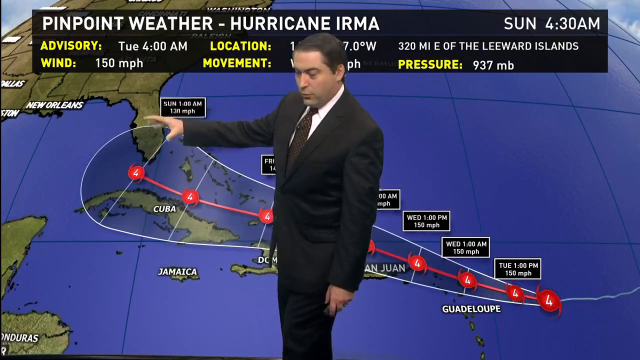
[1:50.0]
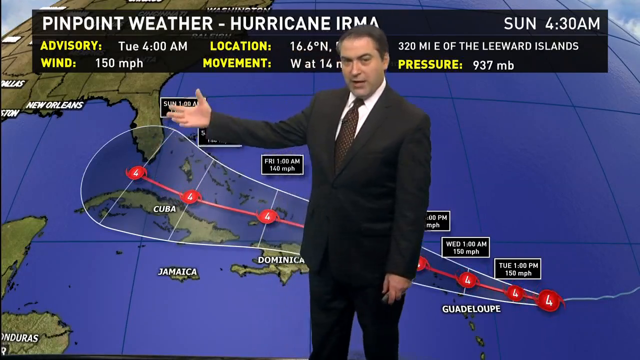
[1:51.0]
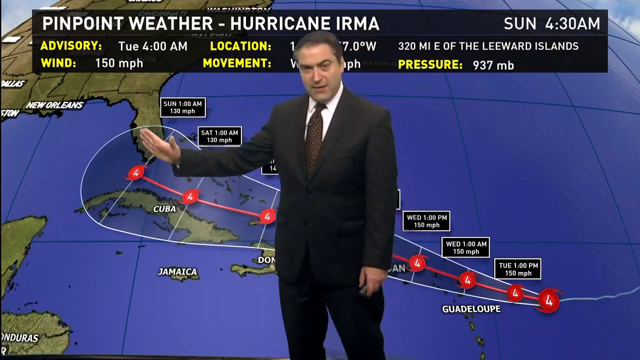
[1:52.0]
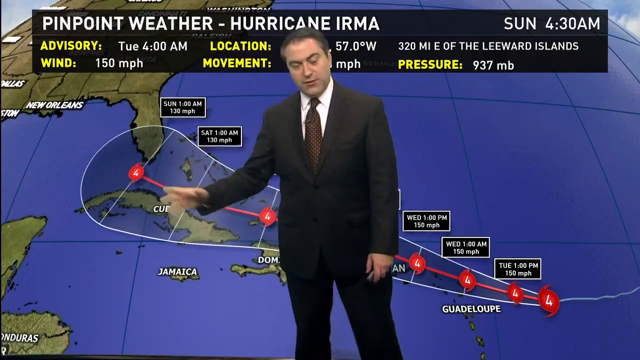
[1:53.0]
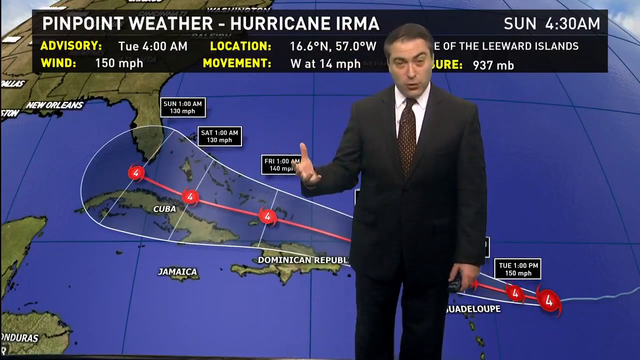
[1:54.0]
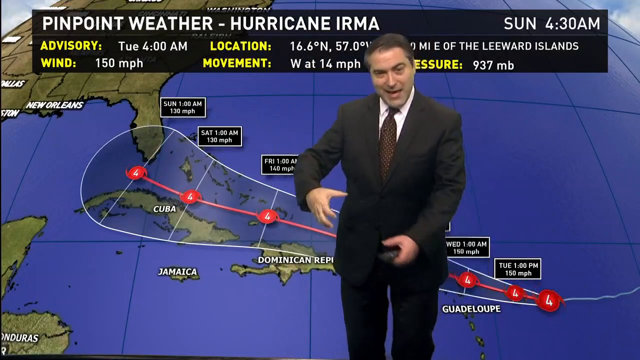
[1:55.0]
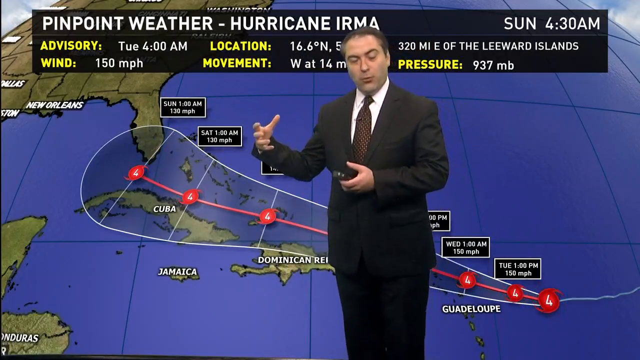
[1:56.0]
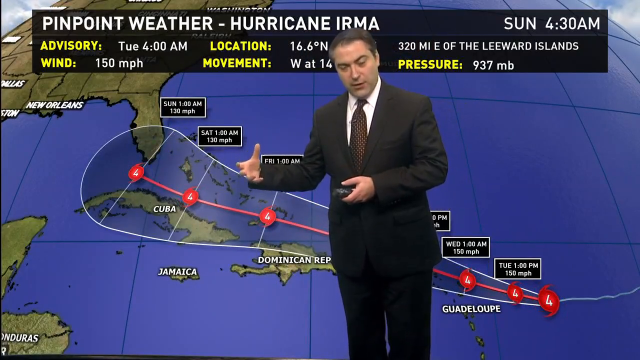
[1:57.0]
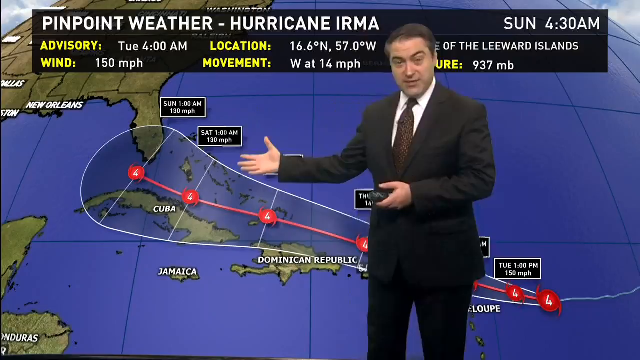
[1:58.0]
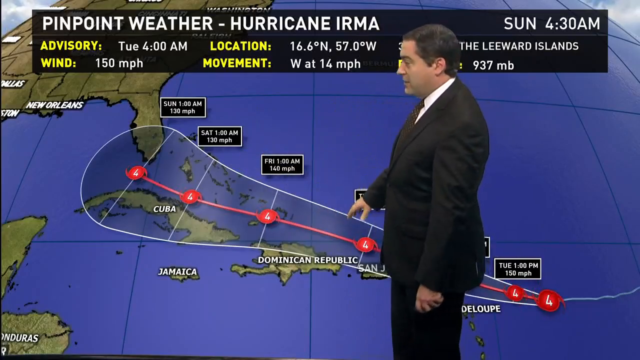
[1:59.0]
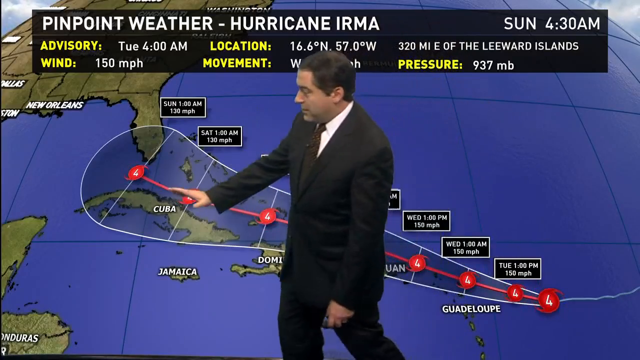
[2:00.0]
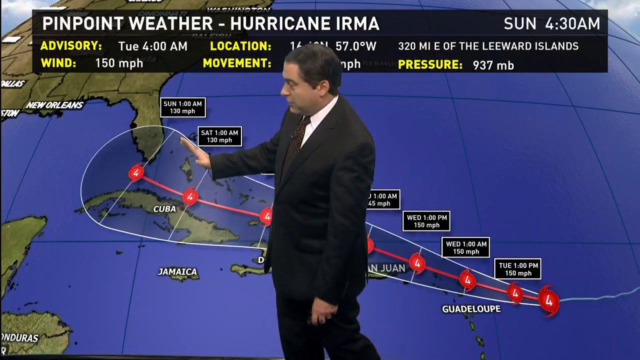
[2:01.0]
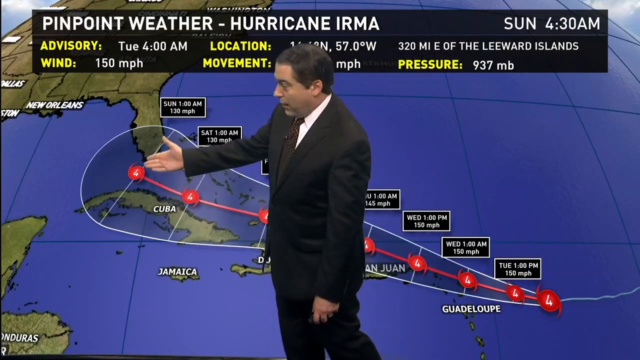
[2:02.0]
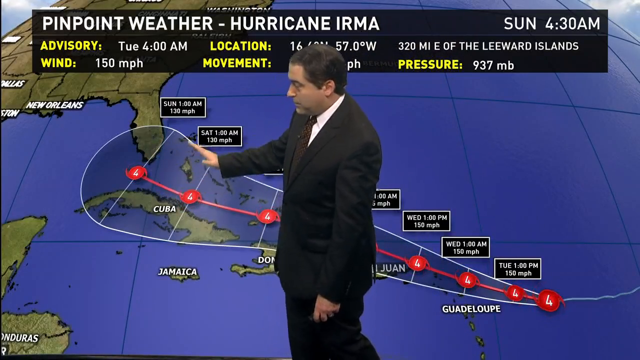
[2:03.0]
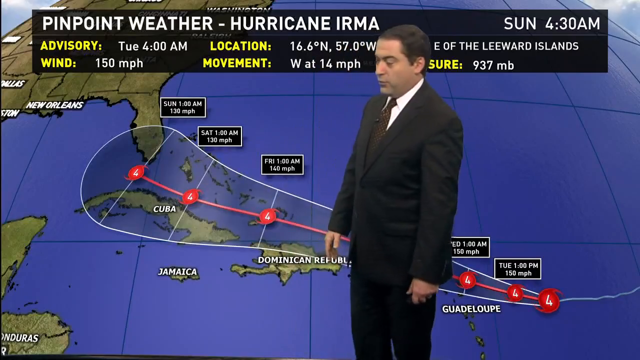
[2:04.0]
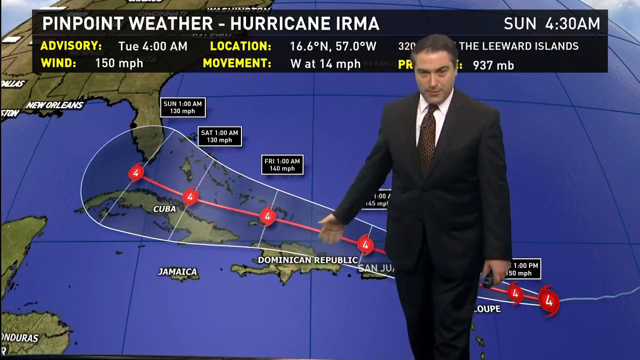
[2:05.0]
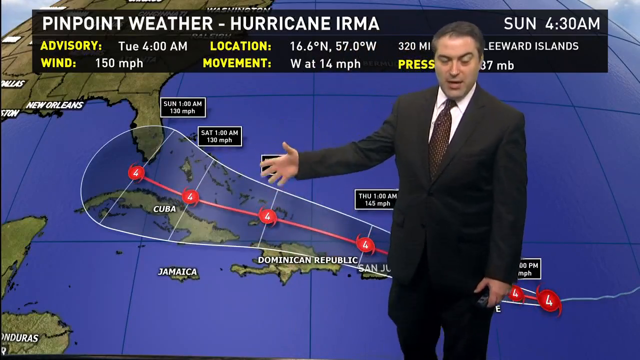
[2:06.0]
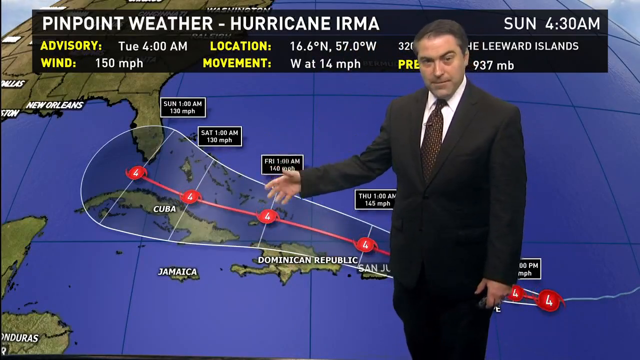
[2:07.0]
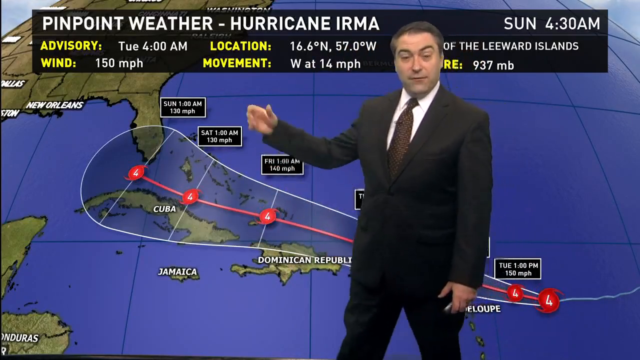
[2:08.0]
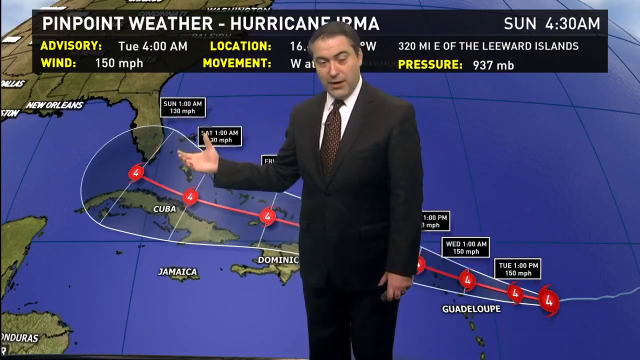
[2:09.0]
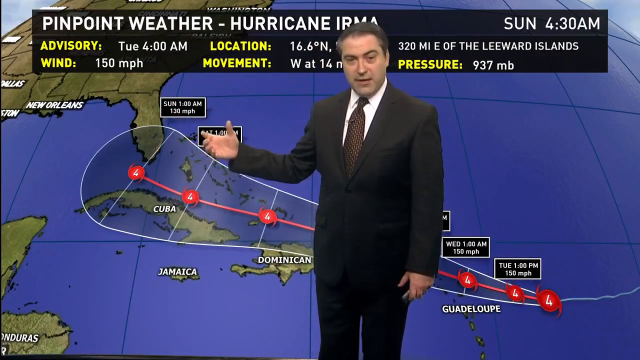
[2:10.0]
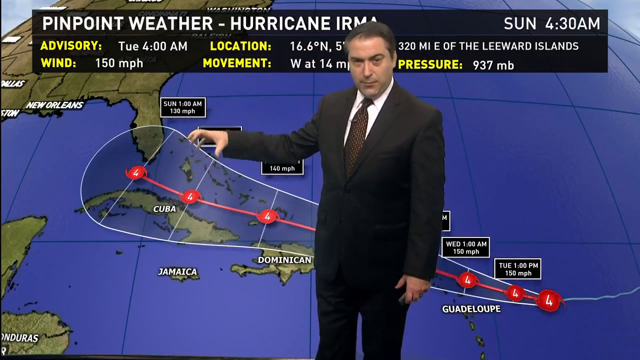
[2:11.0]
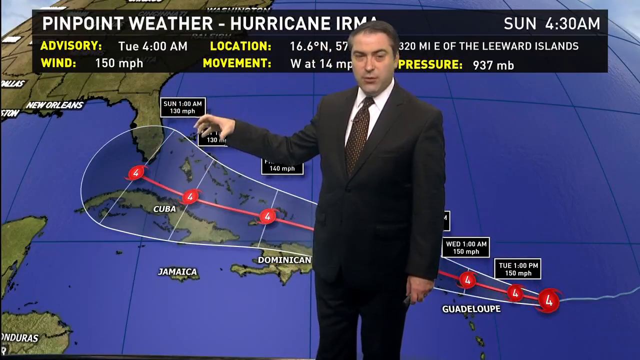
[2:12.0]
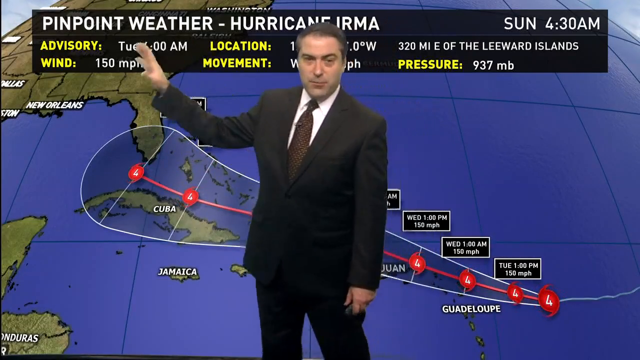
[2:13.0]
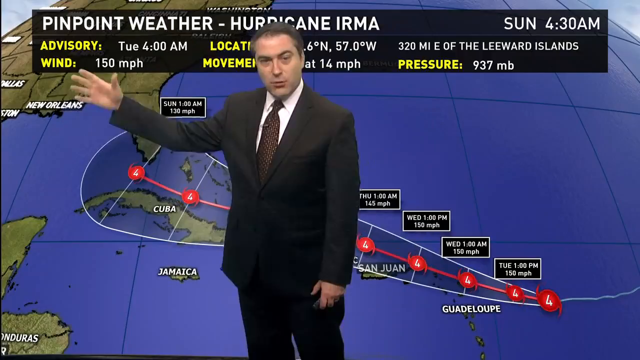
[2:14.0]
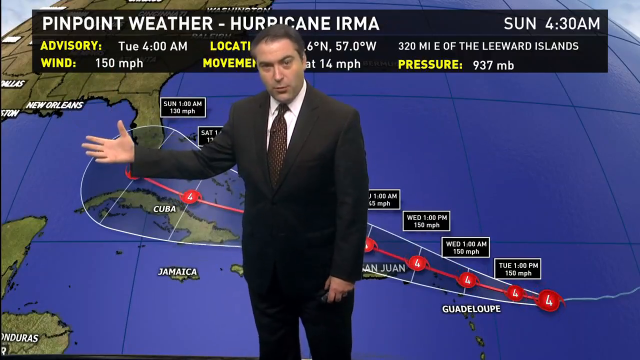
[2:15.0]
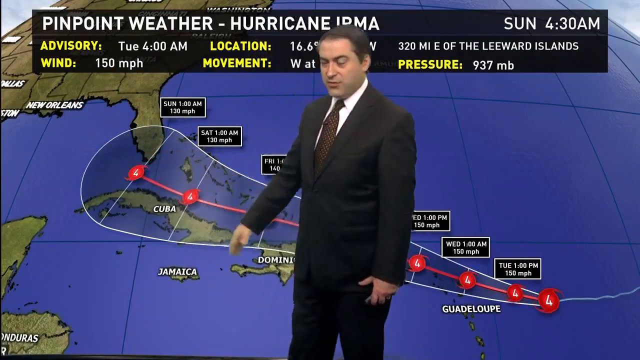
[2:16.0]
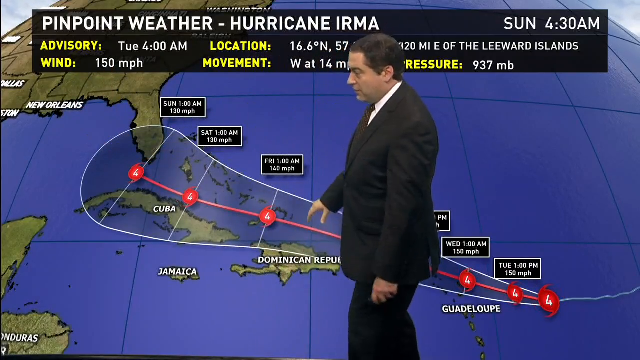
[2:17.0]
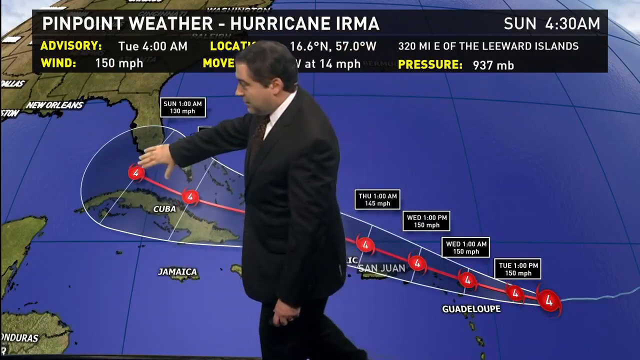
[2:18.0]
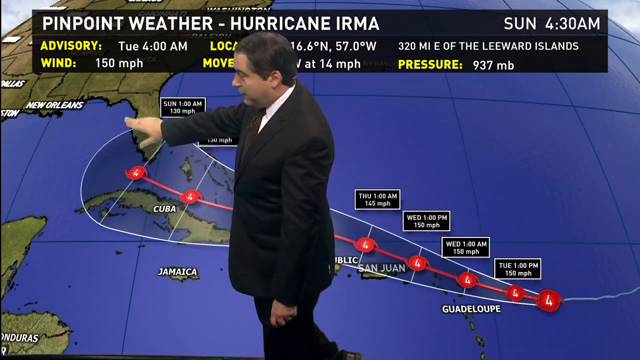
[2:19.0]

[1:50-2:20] Behind the weatherman is a map of the Caribbean and the southeastern United States with the track of Hurricane Irma in red: a line with red spots containing the number four, showing the hurricane's category during different phases. The weatherman stands in the middle of the screen facing the camera, his right arm outstretched with his palm flat but pointed upwards to show the path of the hurricane. He pulls his arm back and gestures back and forth with his hand in sweeping movements. He then focuses on the space between Florida and Cuba, moving his hand up and down there, steps towards the right of the screen and then towards the center, continuing to point his right arm towards the Gulf of Mexico and wave his hand back and forth. The map does not move; all the movement is his.